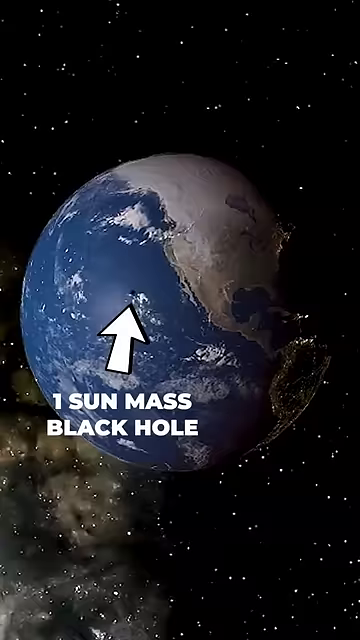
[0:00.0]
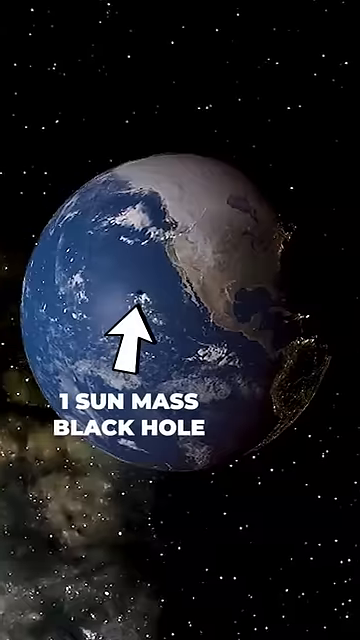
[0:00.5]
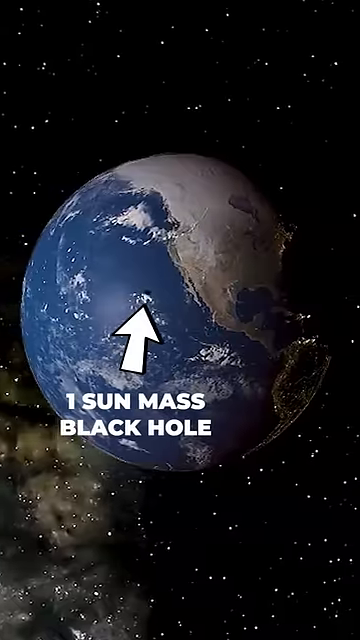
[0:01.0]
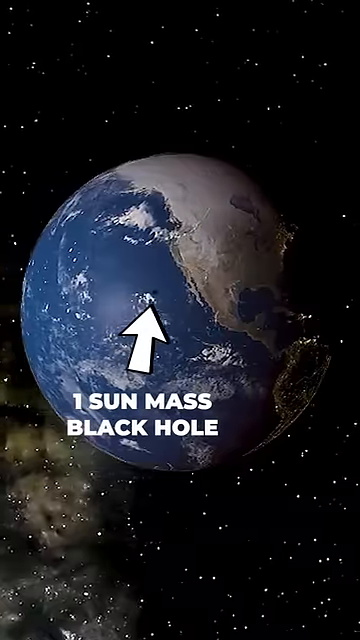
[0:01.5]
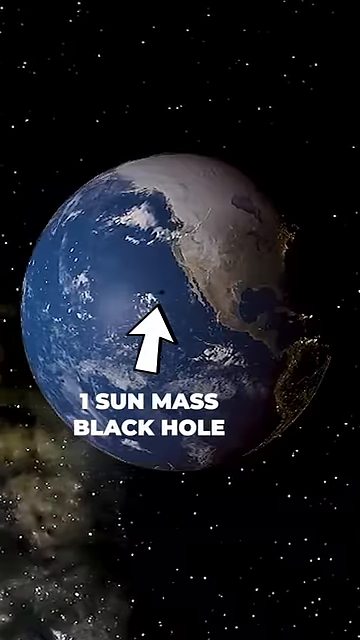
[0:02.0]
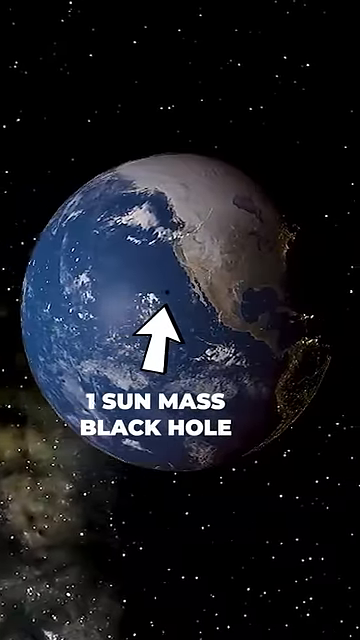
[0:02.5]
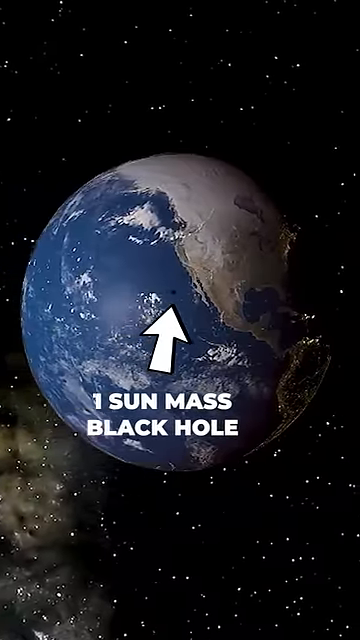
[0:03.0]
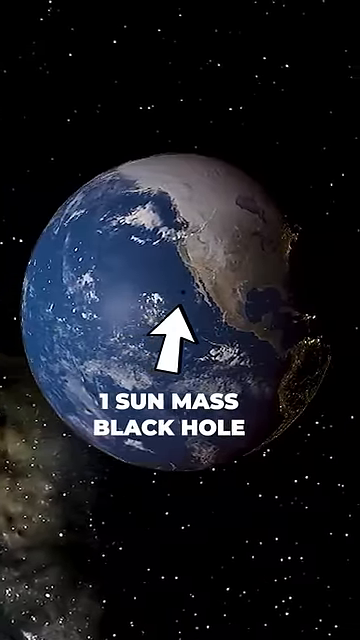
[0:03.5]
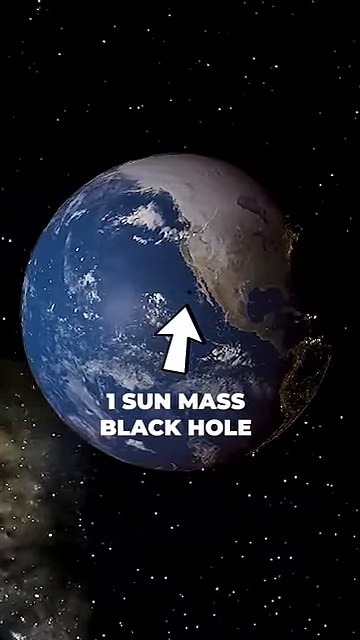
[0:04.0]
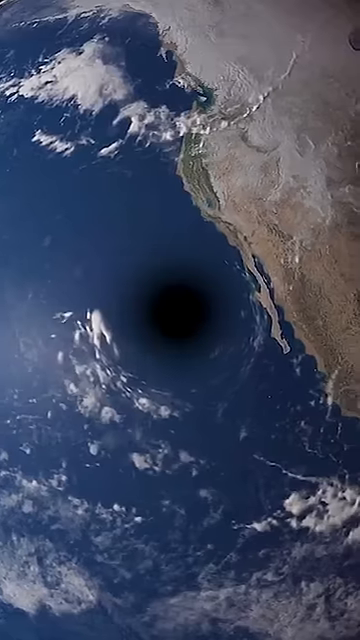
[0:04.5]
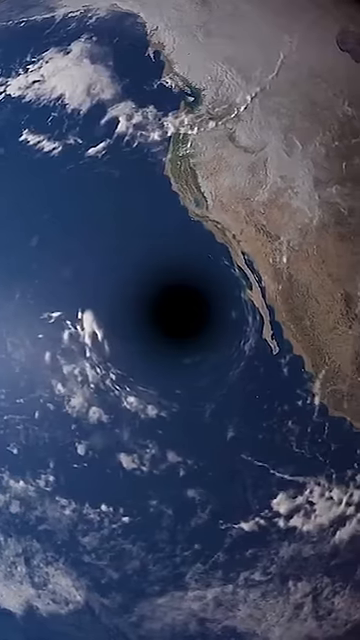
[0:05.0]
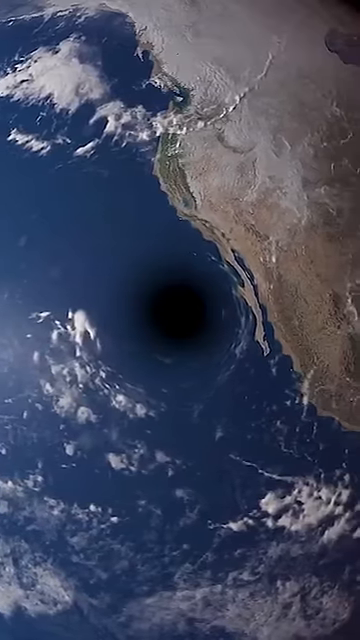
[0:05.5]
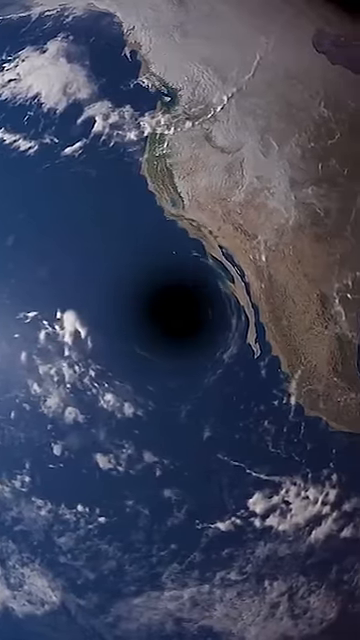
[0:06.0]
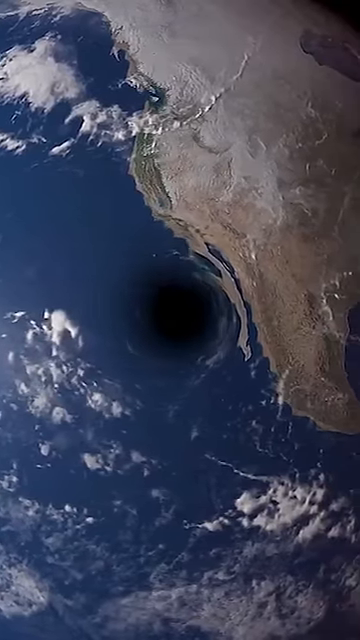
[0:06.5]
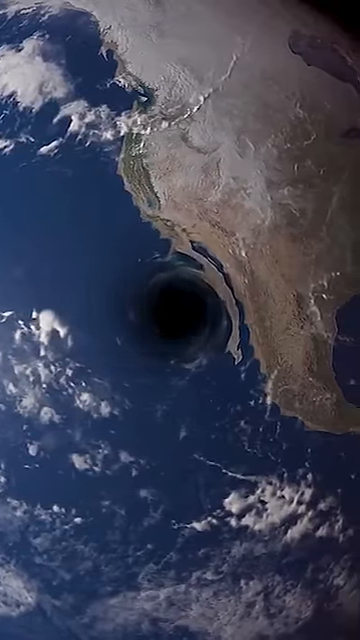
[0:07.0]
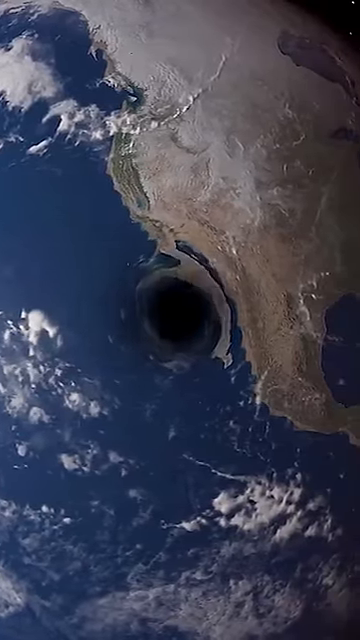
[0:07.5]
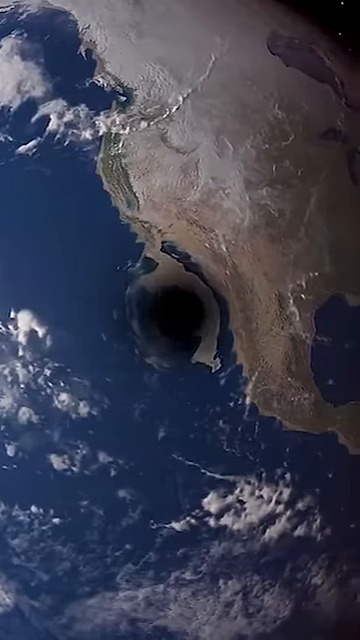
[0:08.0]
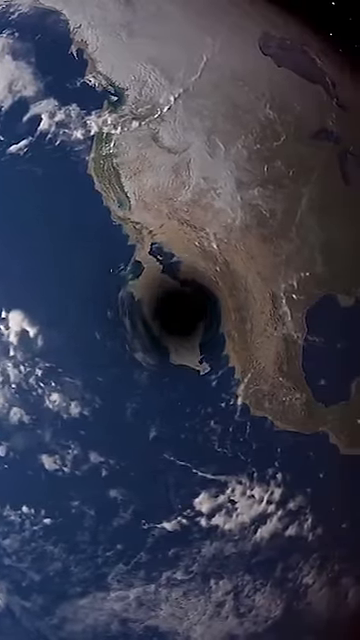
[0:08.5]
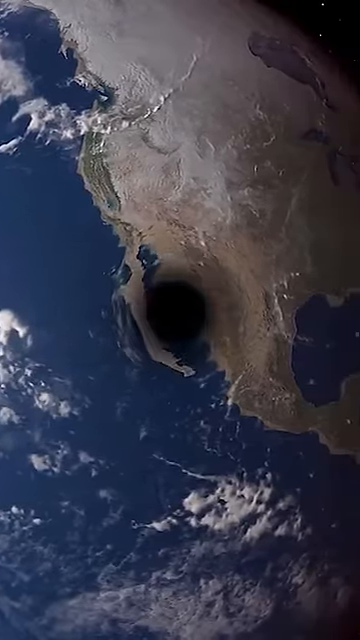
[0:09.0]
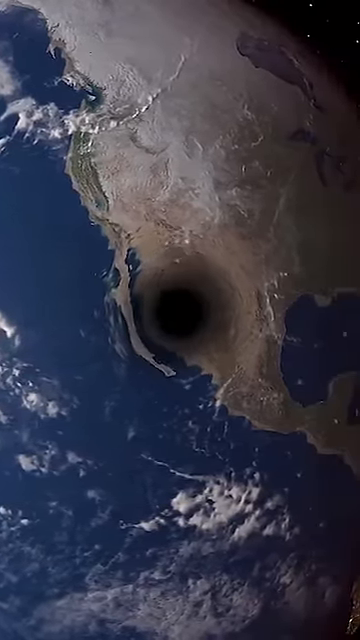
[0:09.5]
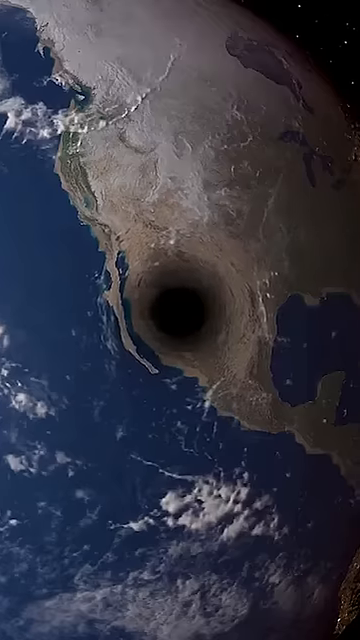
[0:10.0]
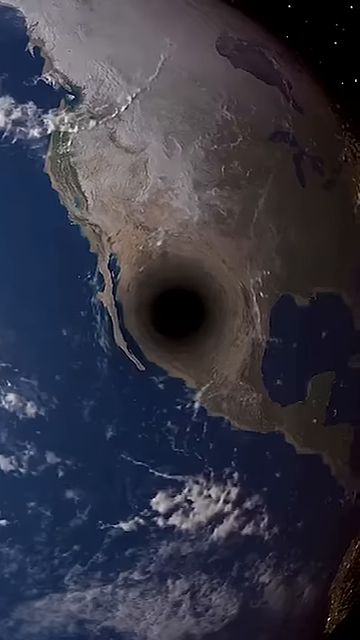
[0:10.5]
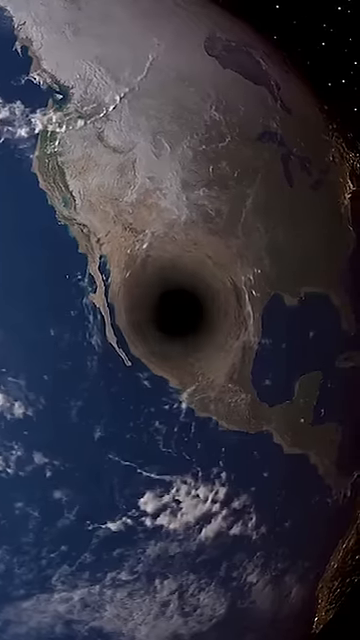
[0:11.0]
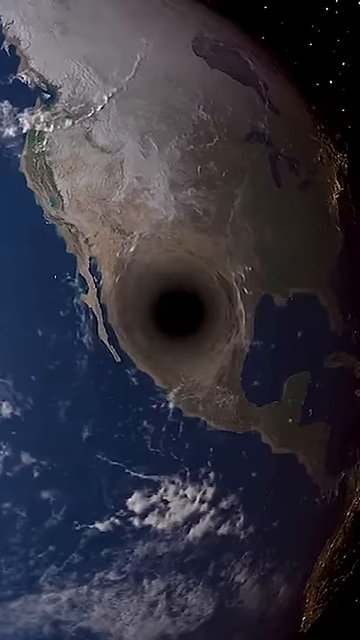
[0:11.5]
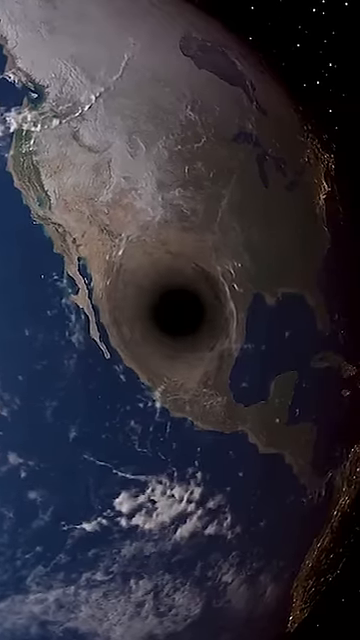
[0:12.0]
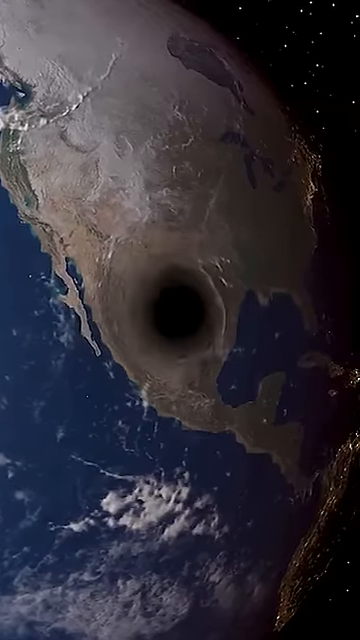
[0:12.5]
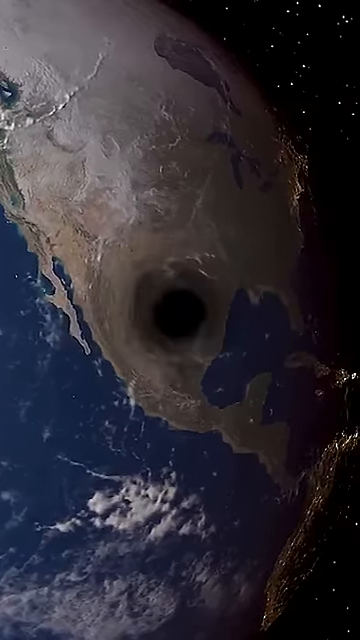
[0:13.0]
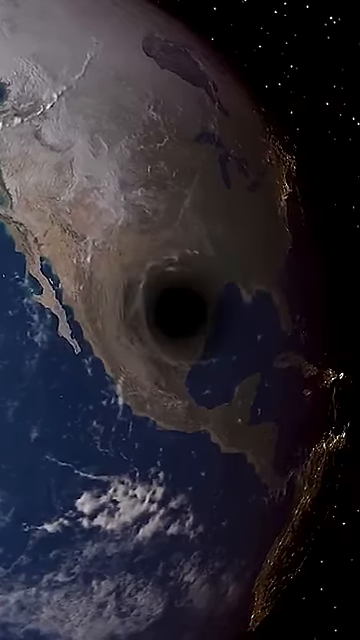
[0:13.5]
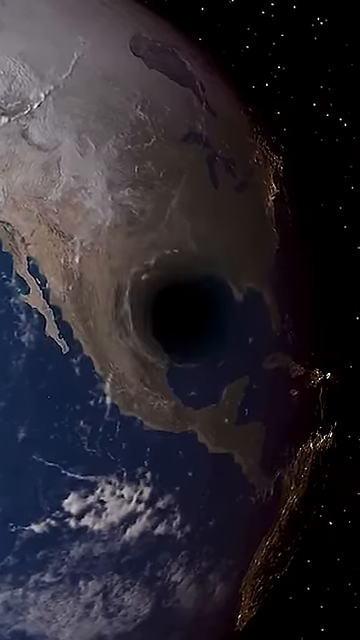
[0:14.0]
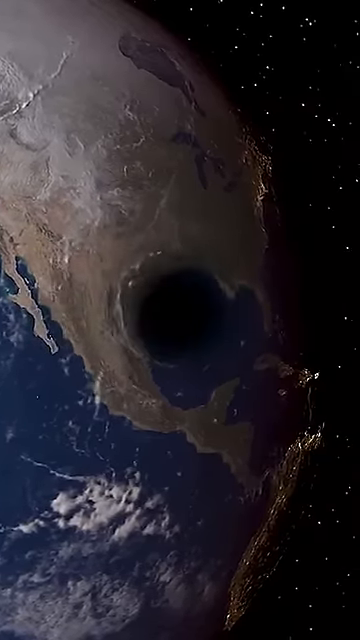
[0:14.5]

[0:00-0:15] The video opens on Earth. A white arrow points to a part of the Earth, accompanied by white bold text that reads "One Sun Mass Black Hole." The camera moves slightly to the left, and the text moves to the right. What looks to be a black hole then appears, with some kind of warping occurring around the black hole in the Earth; the camera moves around with it, though for the most part it stays fairly static. The universe is dark black with white dots throughout and what look to be some nebulas. The Earth is blue as well as whitish gray. The video is a size comparison between Earth and a black hole.